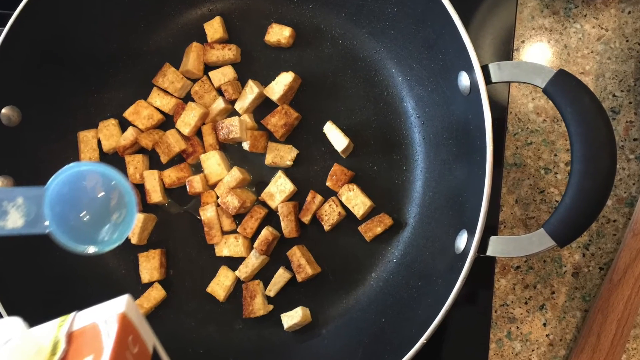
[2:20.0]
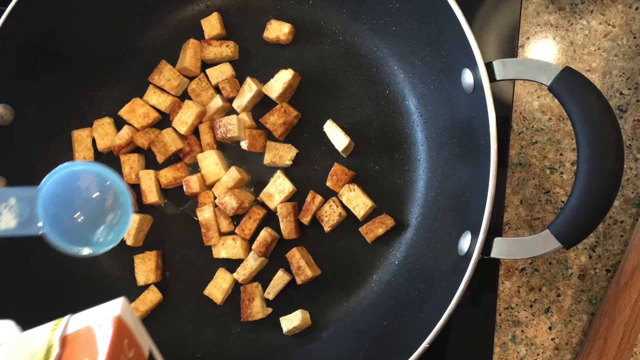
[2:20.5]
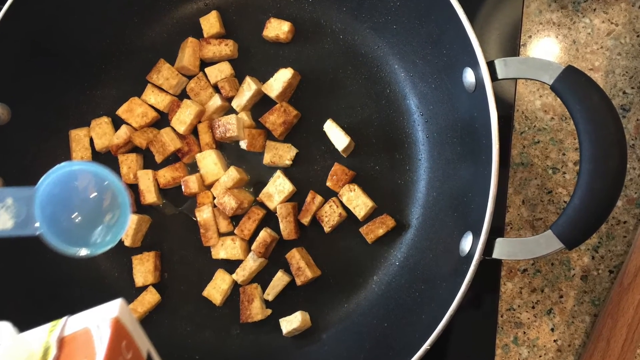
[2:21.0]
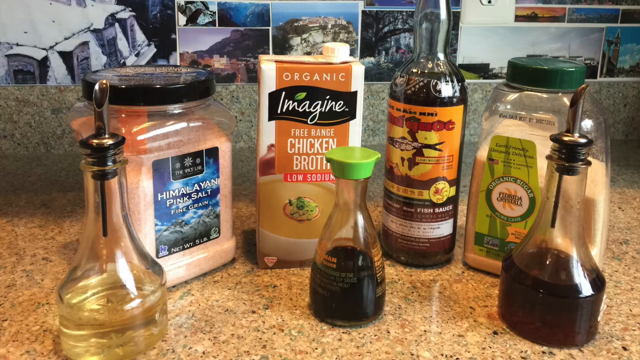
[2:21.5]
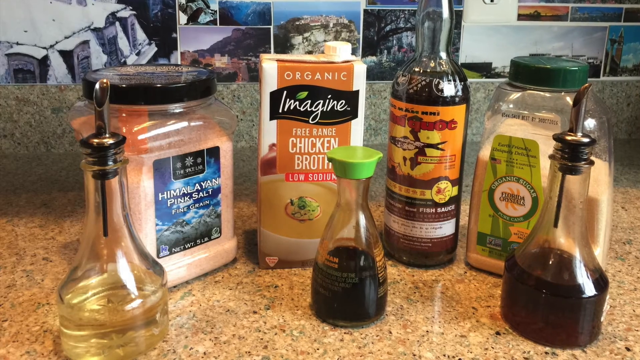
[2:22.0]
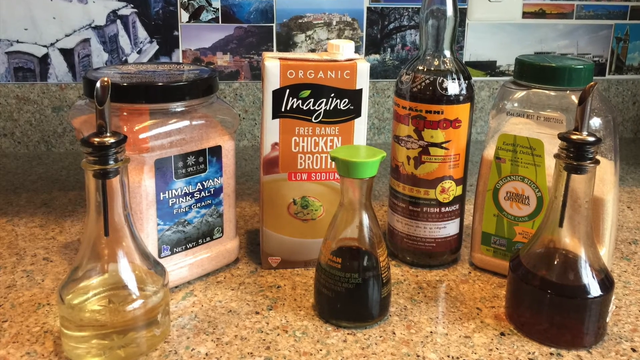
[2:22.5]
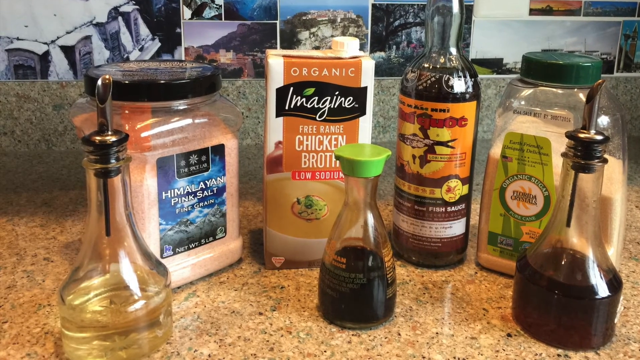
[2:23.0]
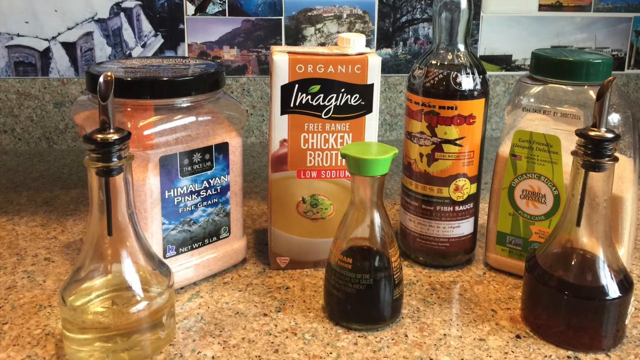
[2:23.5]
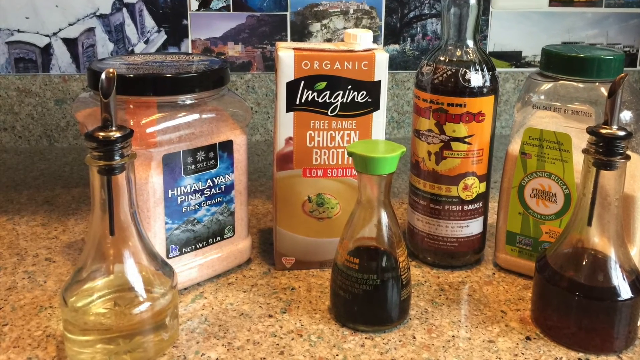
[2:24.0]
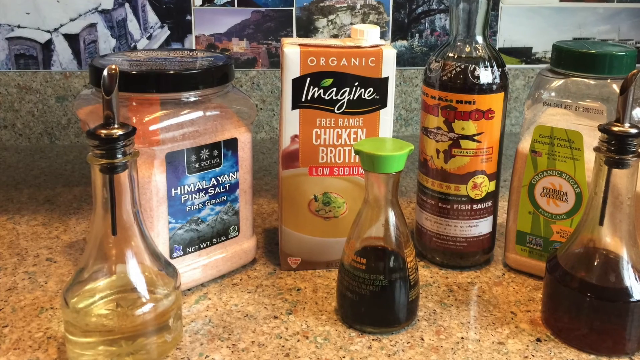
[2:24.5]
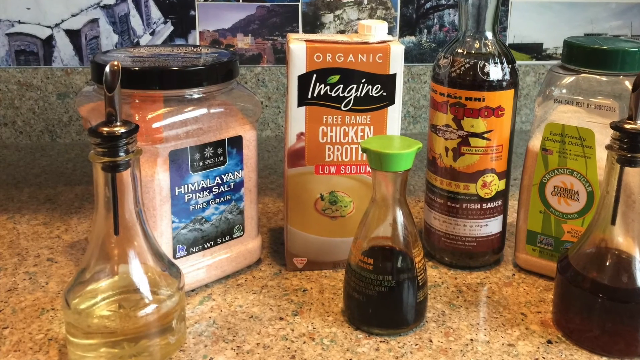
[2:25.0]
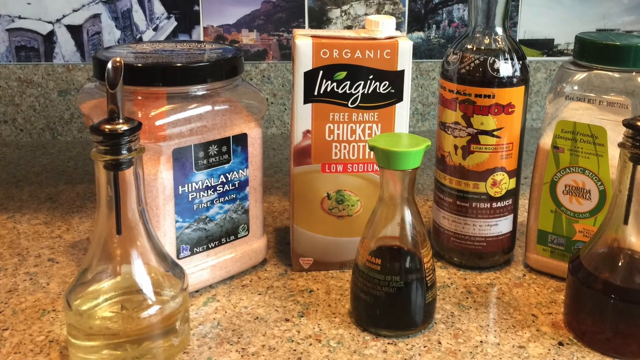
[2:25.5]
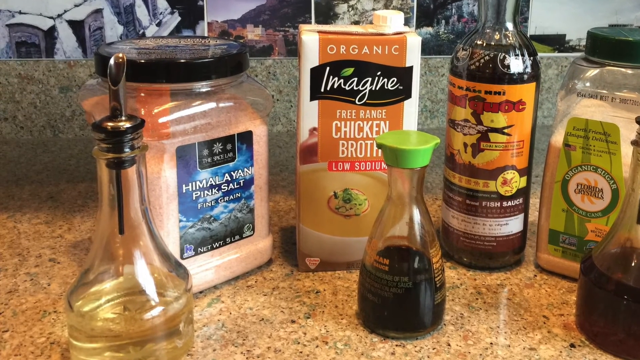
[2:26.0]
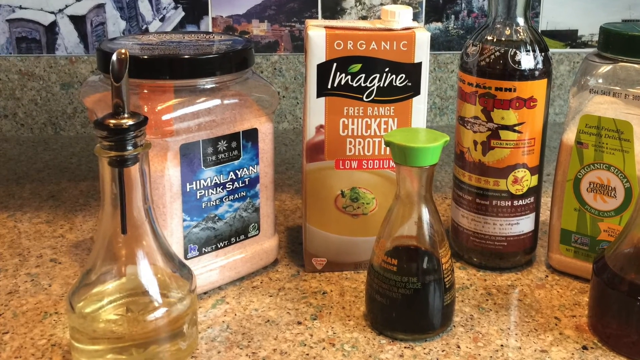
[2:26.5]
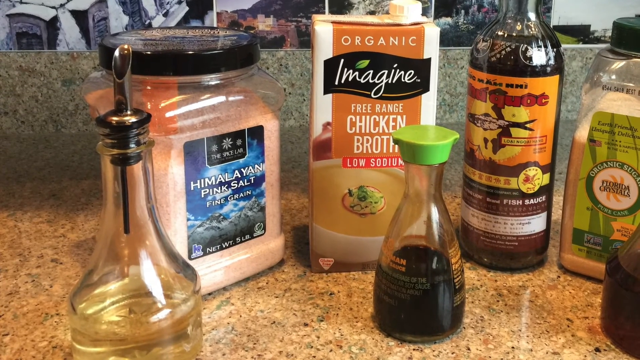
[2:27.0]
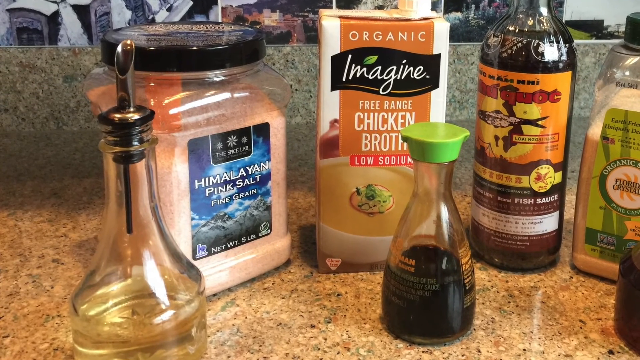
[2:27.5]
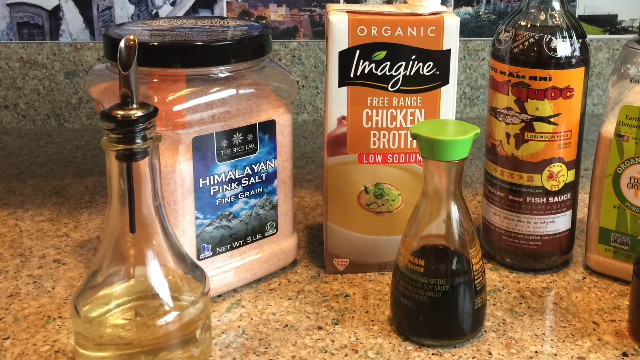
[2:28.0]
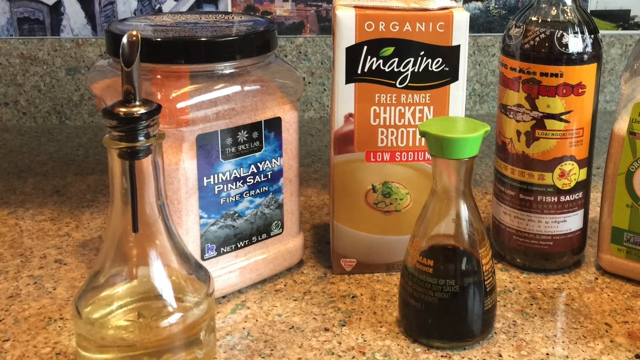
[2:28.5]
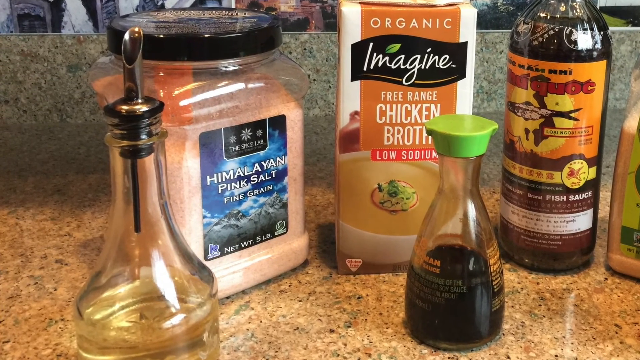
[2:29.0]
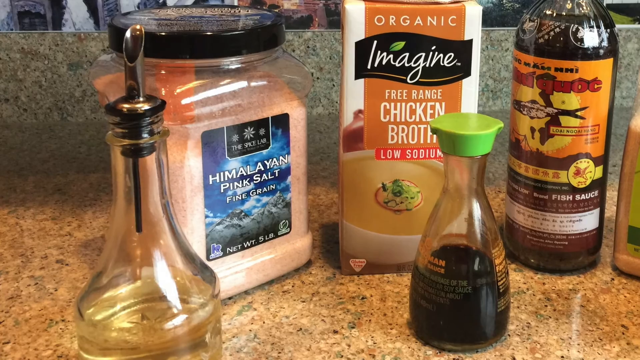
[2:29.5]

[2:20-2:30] Water droplets or specks of some kind are visible all around, especially on the right side where the light shines, where the beveled edge goes up, and possibly some spice is flaking off. The video then shows the different products again, spaced out in two rows. Two canisters flank the chicken broth, which is second from the left in the back row, and the fish sauce has an orange sticker label with red writing. In front are olive oil, apparently a clear liquid, in a glass bottle with a metal pouring spout; soy sauce in glass with a green top; and on the right the same kind of olive oil bottle with a darker sauce or oil, with some space between each. The camera zooms in on the left side on the pink Himalayan salt, which has a blue sticker on the front. It shows what looks like a snowflake and sun in a black box, and in white, in capital letters, "HIMALAYAN", with "pink salt" underneath. Further down in smaller text it says "fine grain" and gives the weight, five pounds.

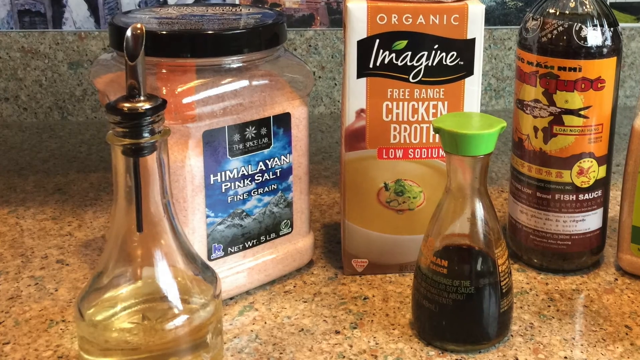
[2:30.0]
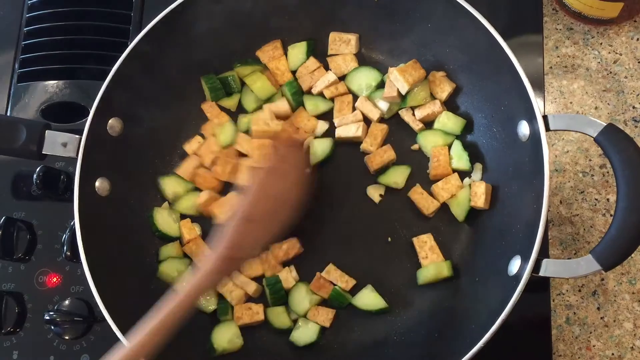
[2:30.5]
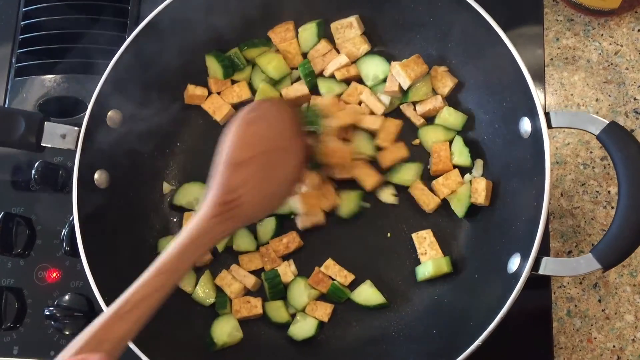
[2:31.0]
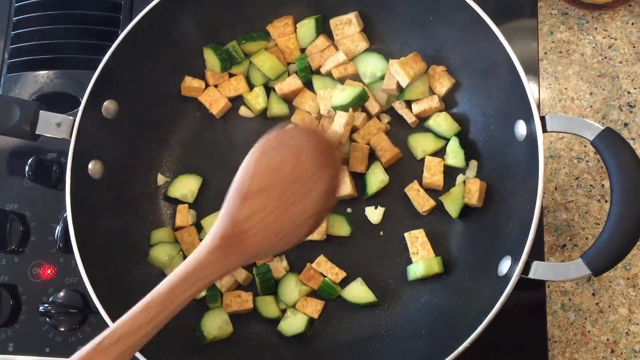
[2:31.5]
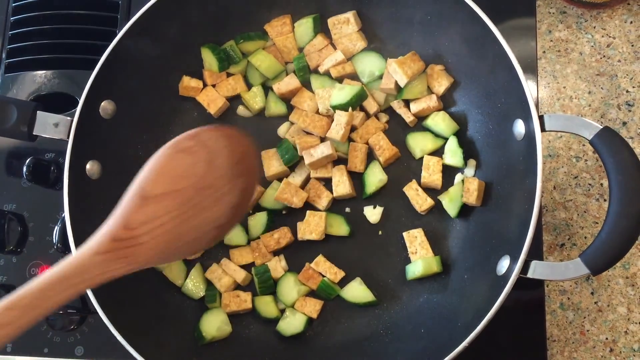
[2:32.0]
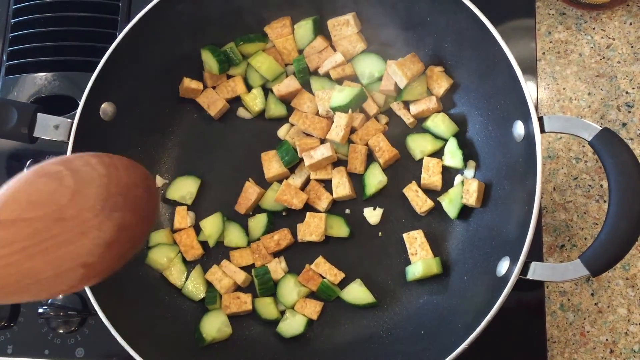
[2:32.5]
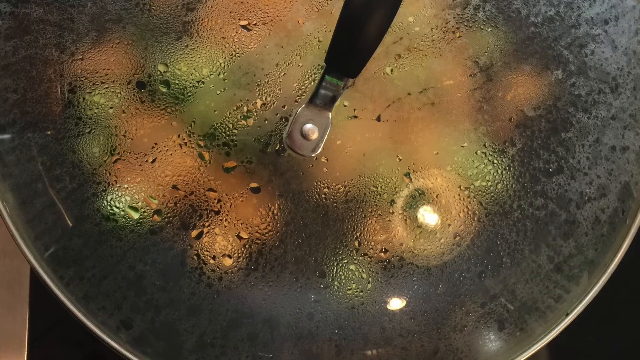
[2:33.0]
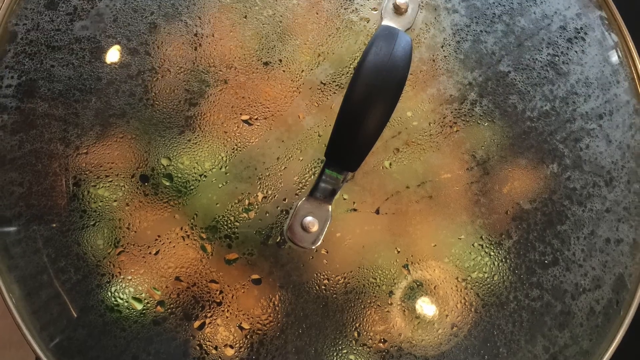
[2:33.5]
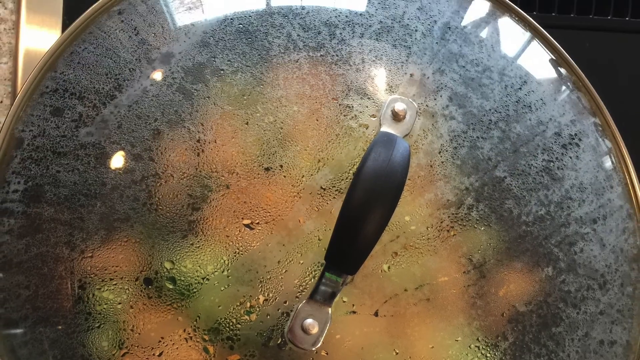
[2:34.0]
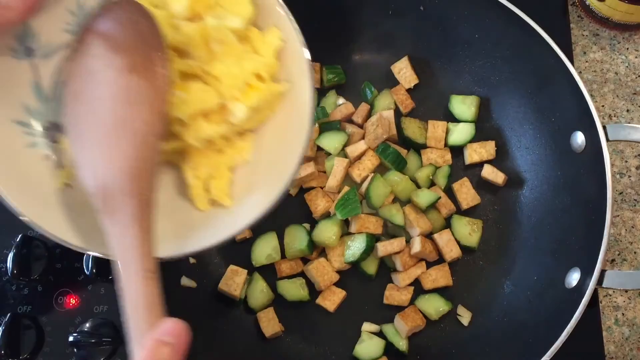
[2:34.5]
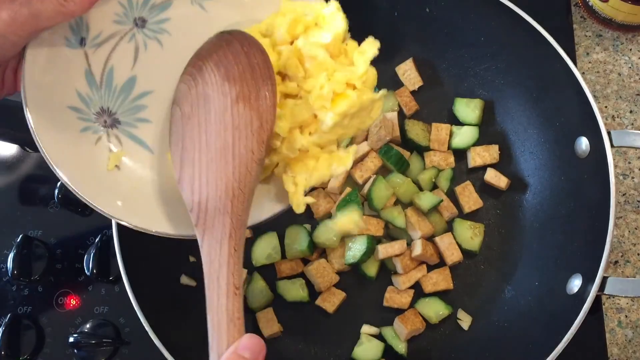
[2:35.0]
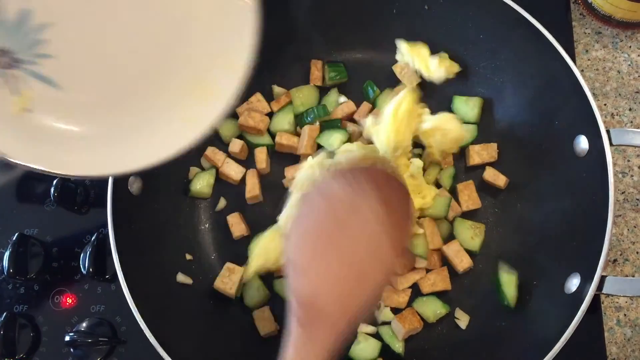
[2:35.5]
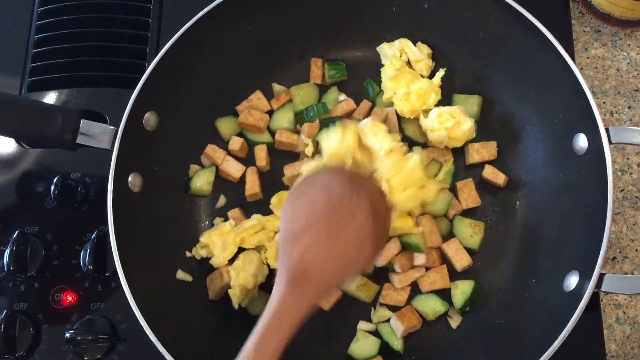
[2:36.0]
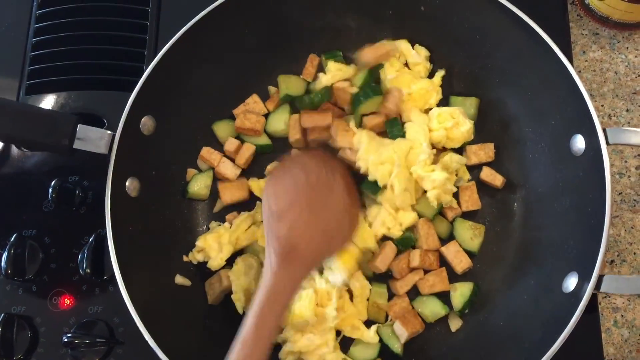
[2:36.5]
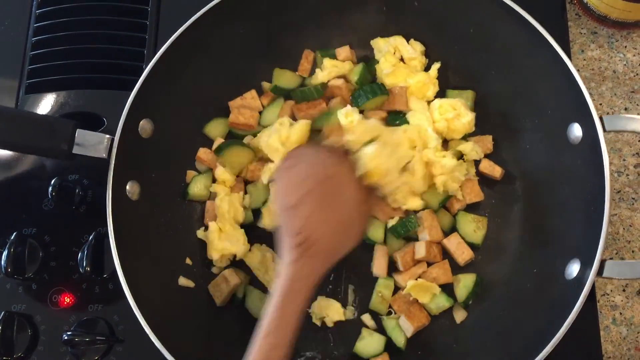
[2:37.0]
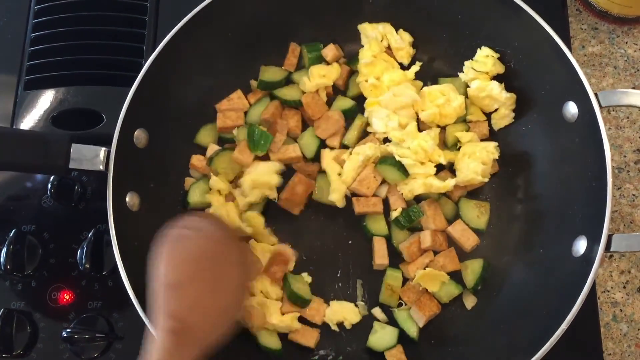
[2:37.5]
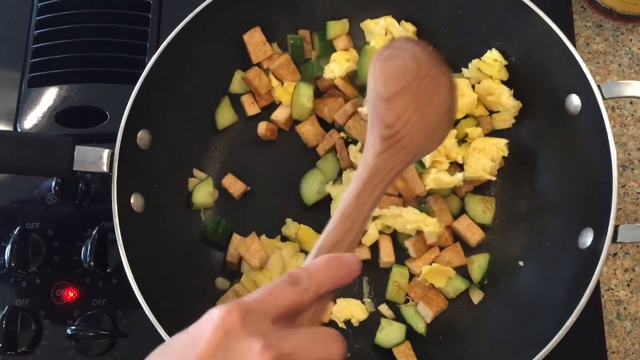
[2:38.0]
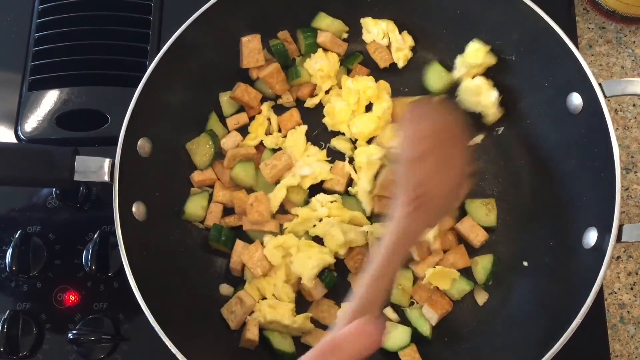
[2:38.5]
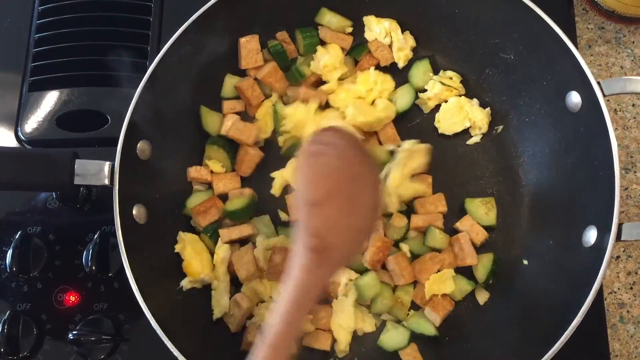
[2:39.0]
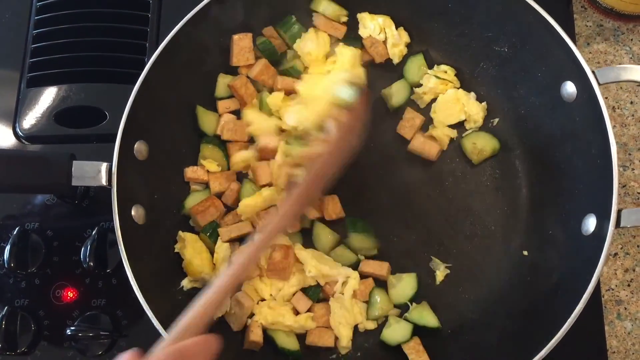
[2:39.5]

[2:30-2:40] Somebody mixes the tofu and zucchini together, moving left and right, with steam coming up. As he mixes, the food separates, leaving more black space on the left side where there is nothing. He taps the spoon on the left edge and continues. The lid on top is covered in droplets of condensation, many very small and a few bigger. The camera pans, showing more of the black handle. The lid is quickly pulled off, and a left hand is holding what looks like a palm leaf. The eggs are on the right side and are spooned in, then mixed with the other two ingredients, left to right and up and down.